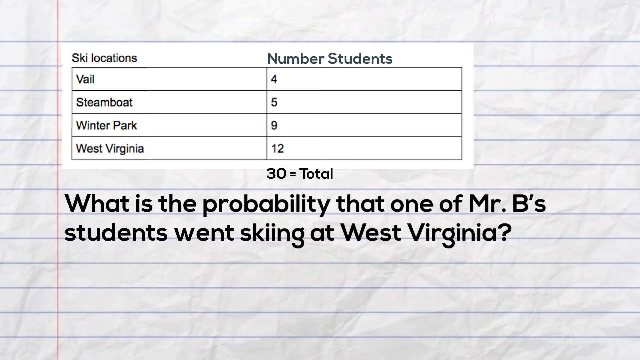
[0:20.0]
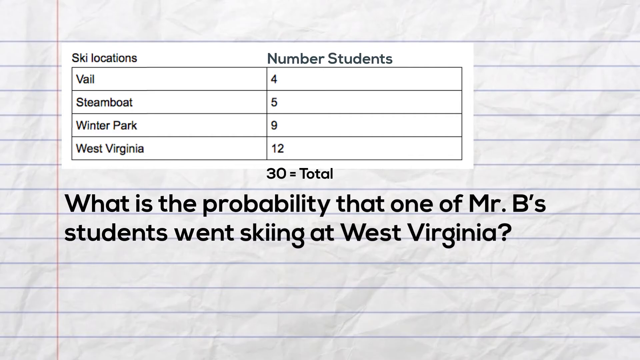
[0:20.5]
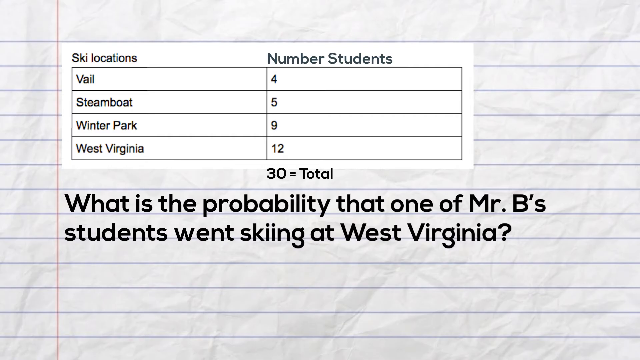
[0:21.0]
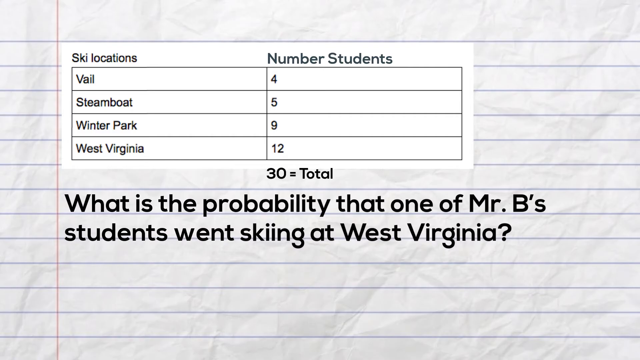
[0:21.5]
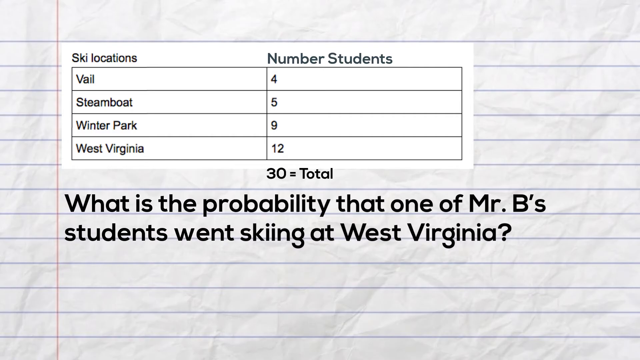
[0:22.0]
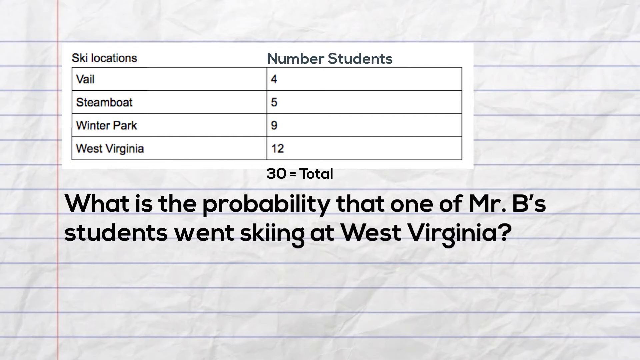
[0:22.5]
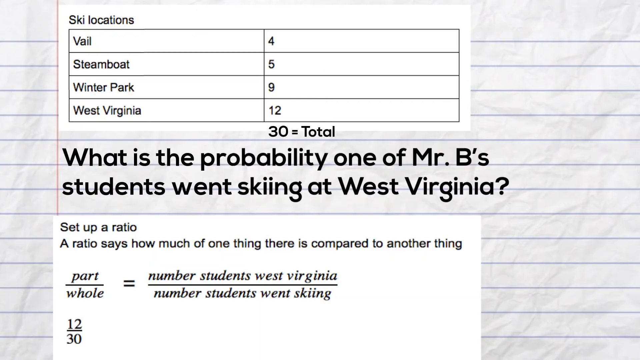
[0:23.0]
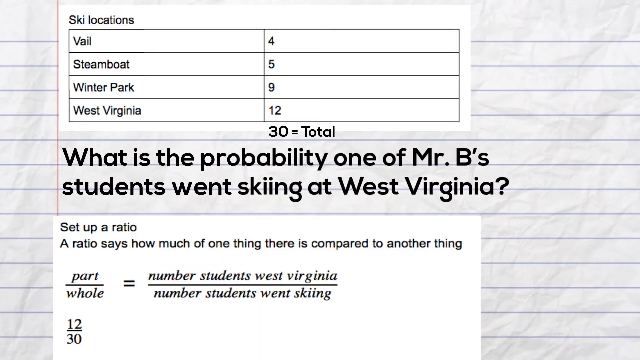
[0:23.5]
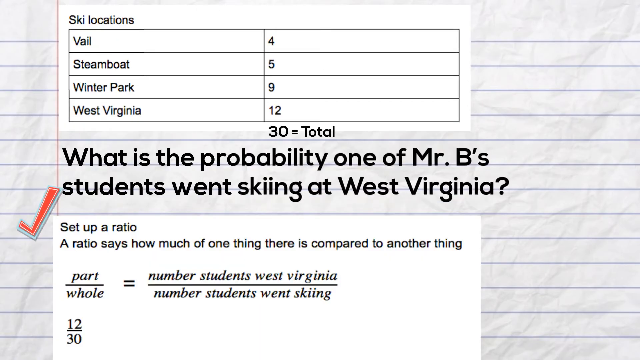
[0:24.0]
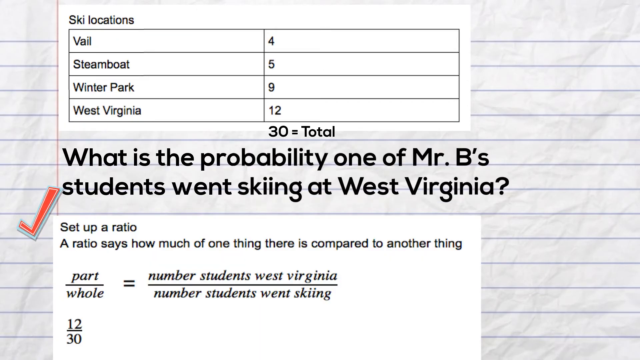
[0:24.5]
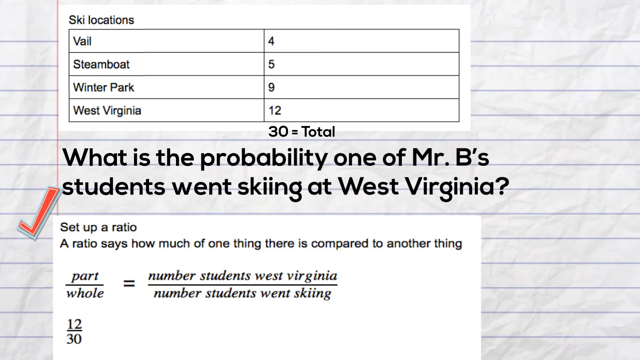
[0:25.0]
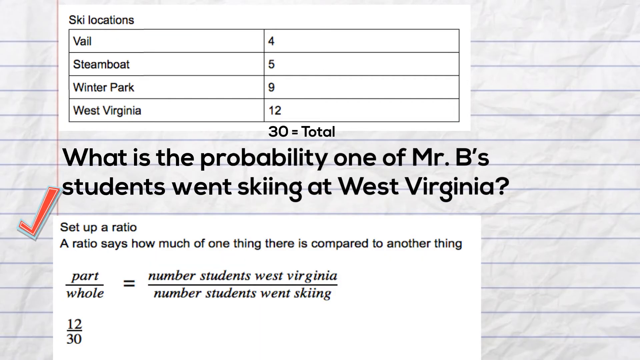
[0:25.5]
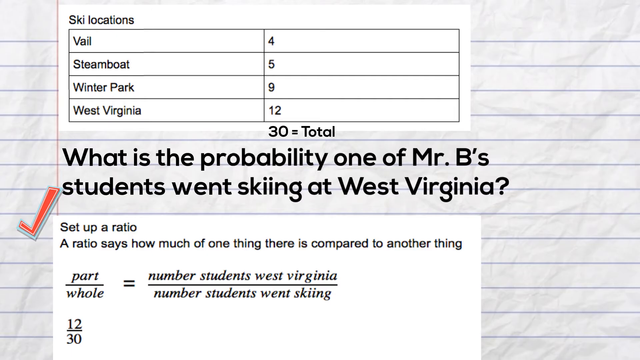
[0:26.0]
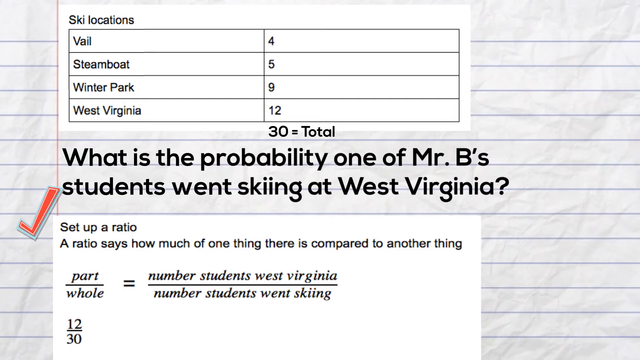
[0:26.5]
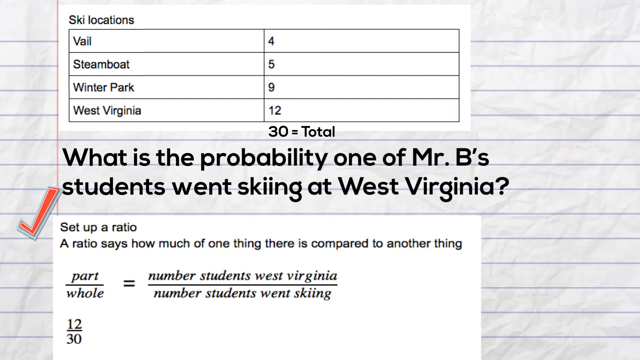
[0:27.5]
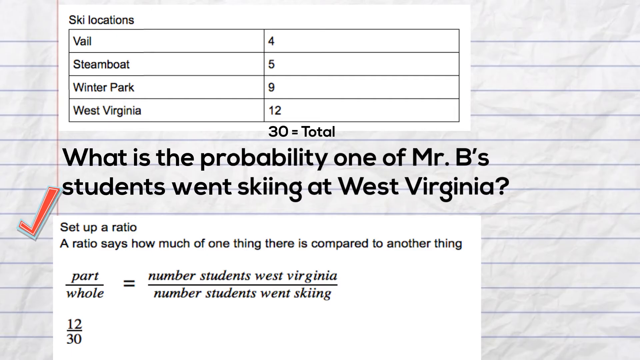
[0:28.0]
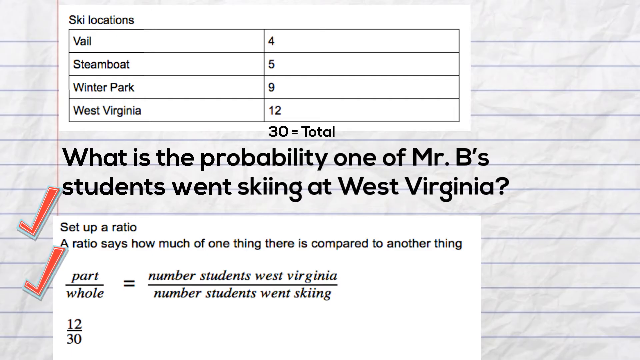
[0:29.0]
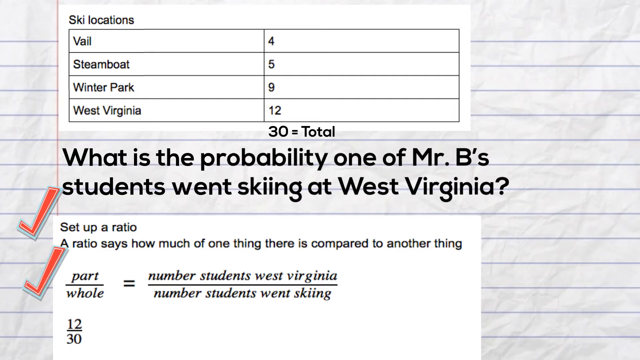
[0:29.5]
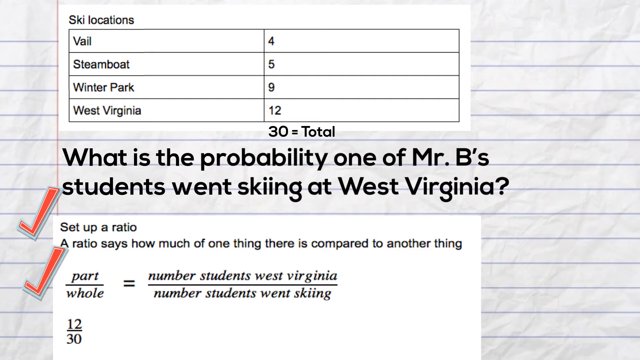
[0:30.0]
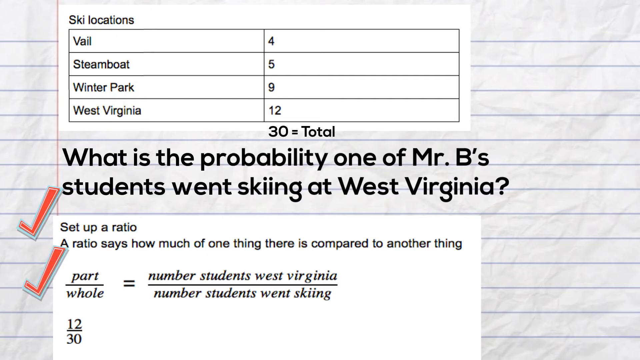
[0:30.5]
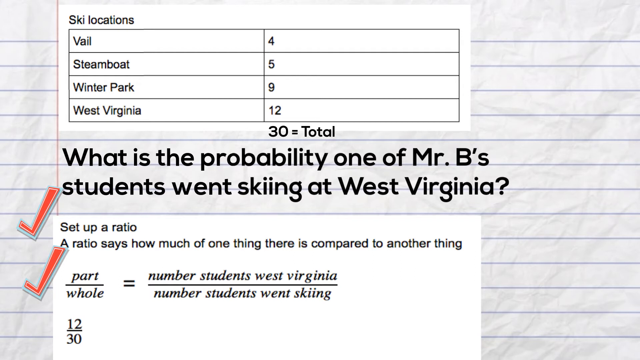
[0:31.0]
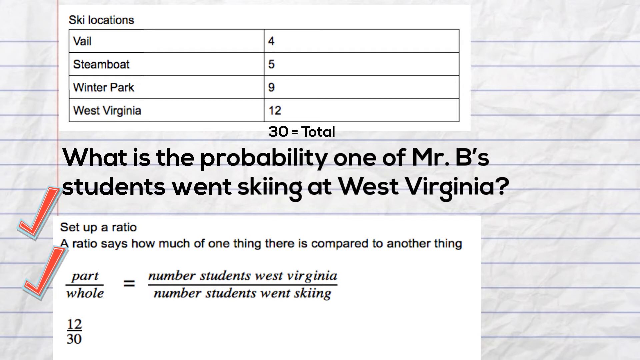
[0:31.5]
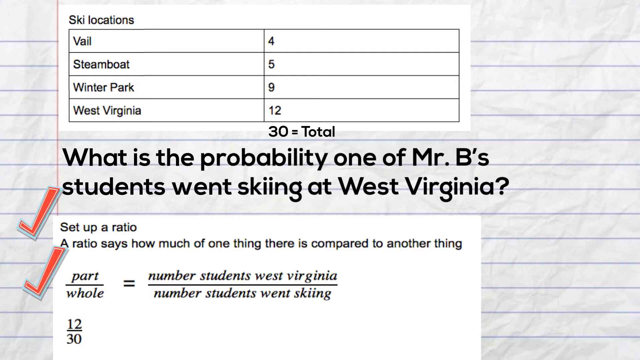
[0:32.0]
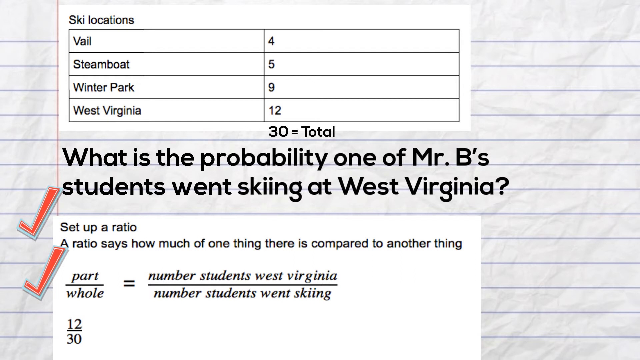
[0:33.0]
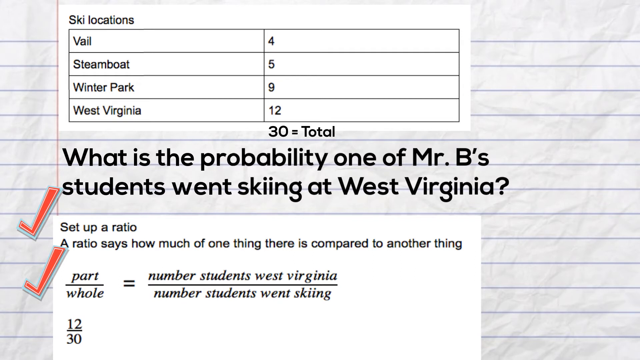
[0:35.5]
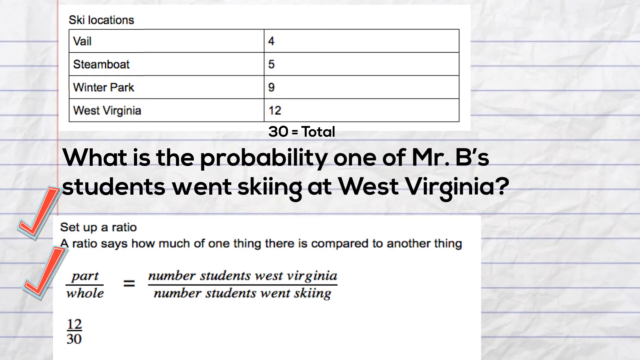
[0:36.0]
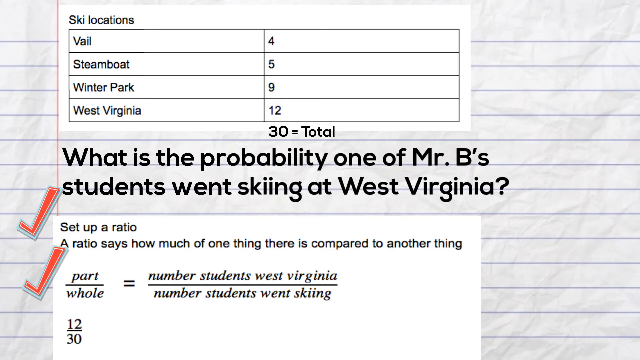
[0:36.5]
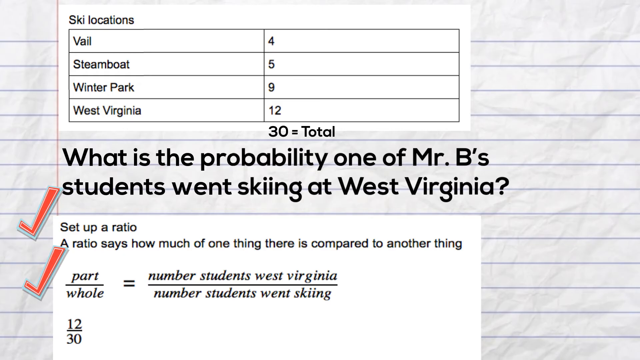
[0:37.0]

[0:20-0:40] The table and the question about the probability that one of Mr. B's students went skiing at West Virginia are on screen. After a moment, an orange check mark suddenly appears in the left margin. Another white rectangle, of the same type as the one the table is on, appears inset on the notebook page. It is titled "set up a ratio," and below the title is the explanation "a ratio says how much of one thing there is compared to another thing." A fraction follows, with the part as the numerator and the whole as the denominator: the number of students for West Virginia over the number of students who went skiing. An orange check mark appears by the ratio as it is set up.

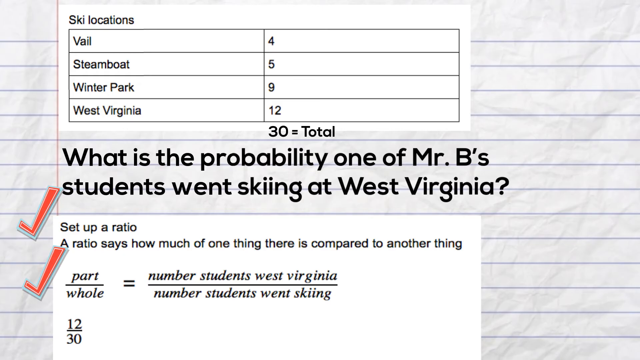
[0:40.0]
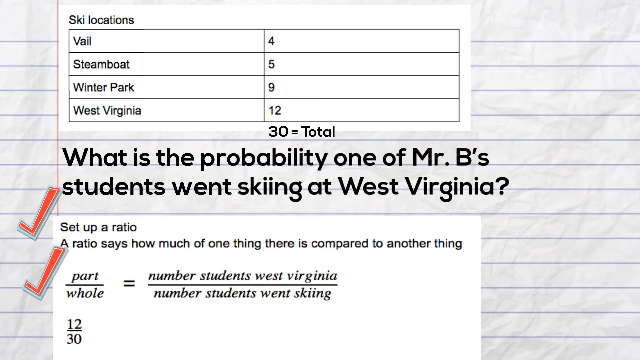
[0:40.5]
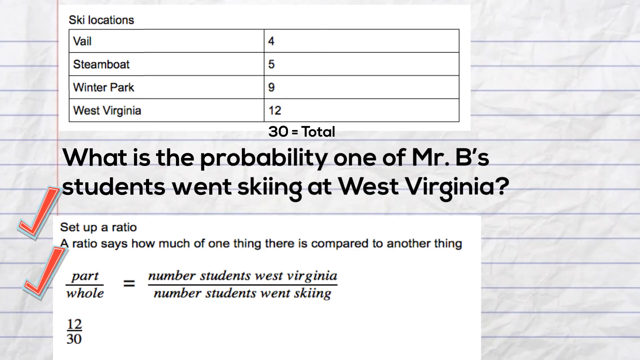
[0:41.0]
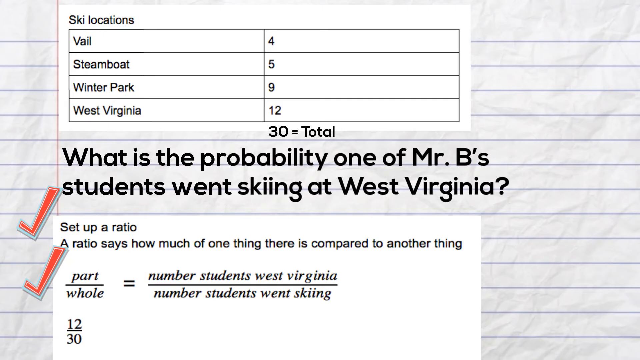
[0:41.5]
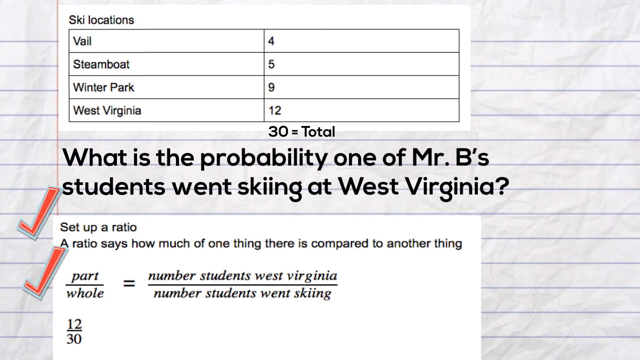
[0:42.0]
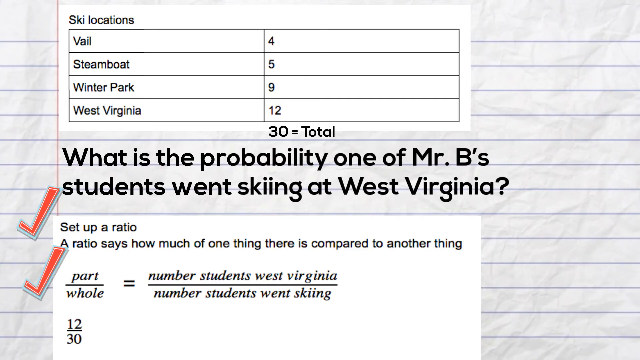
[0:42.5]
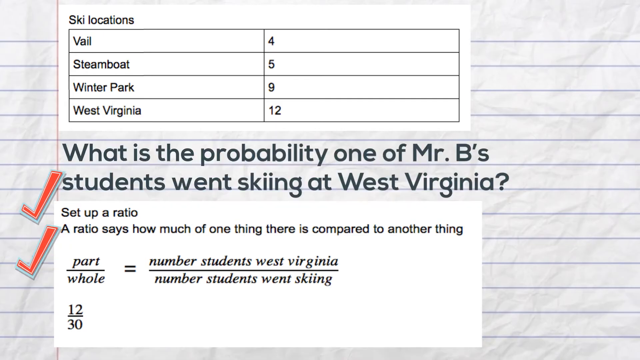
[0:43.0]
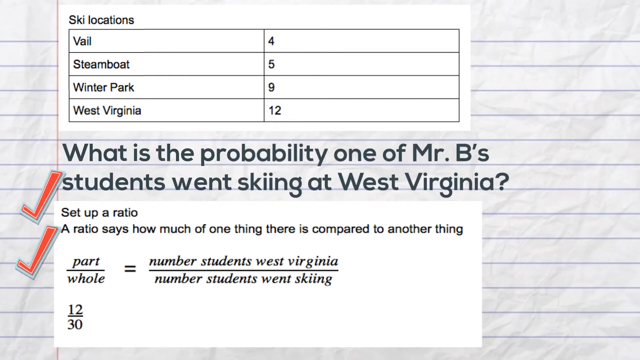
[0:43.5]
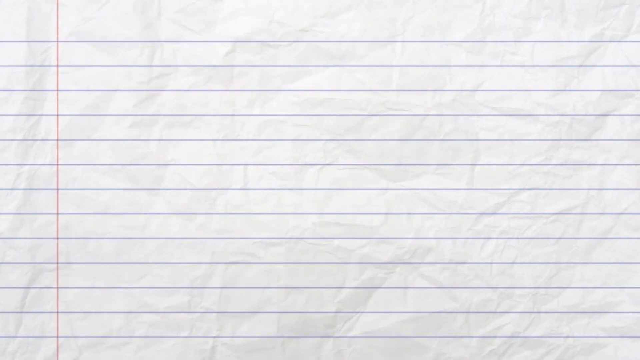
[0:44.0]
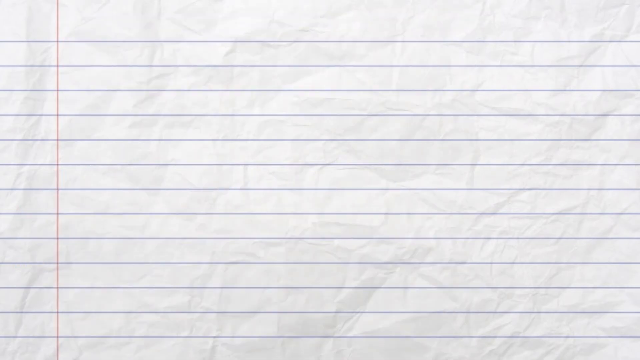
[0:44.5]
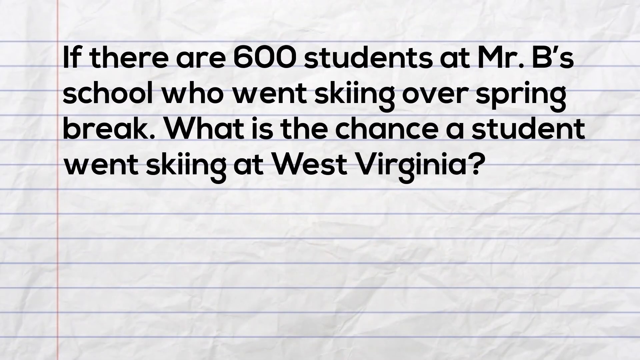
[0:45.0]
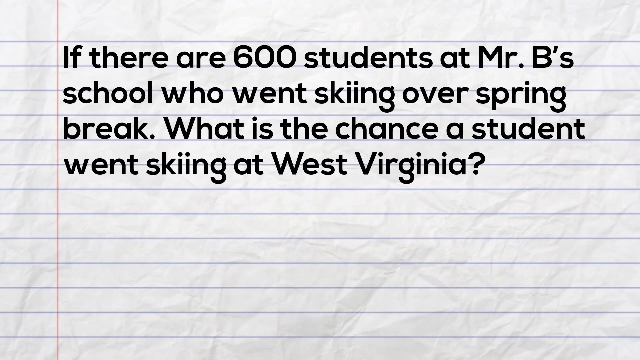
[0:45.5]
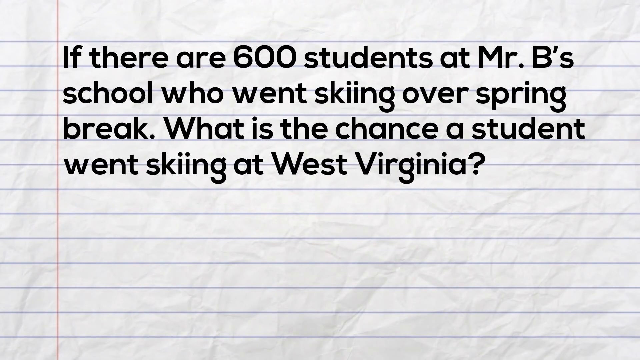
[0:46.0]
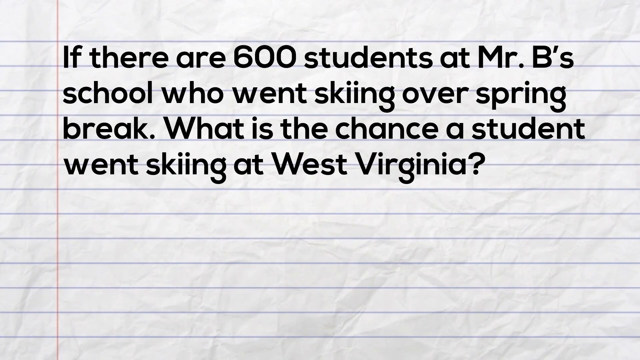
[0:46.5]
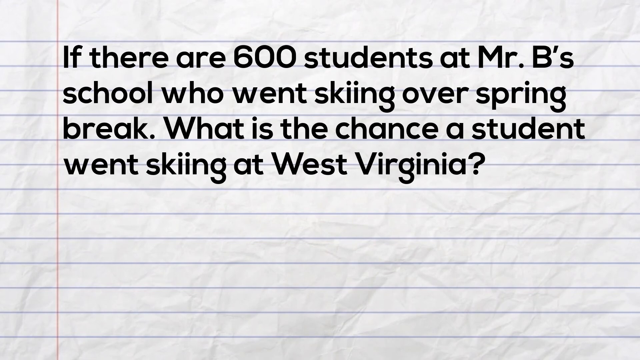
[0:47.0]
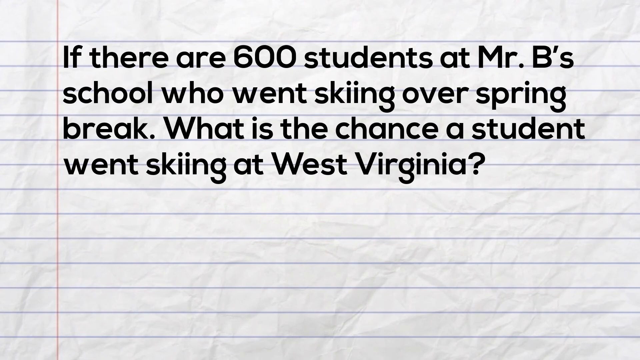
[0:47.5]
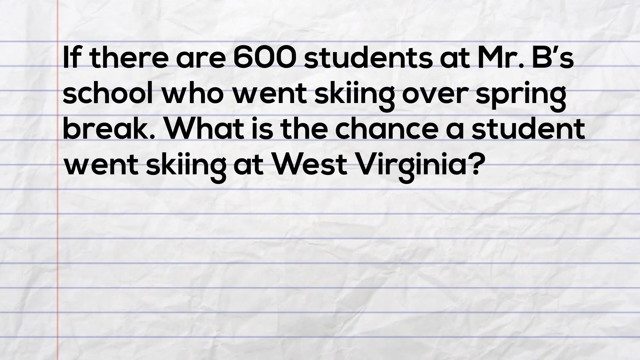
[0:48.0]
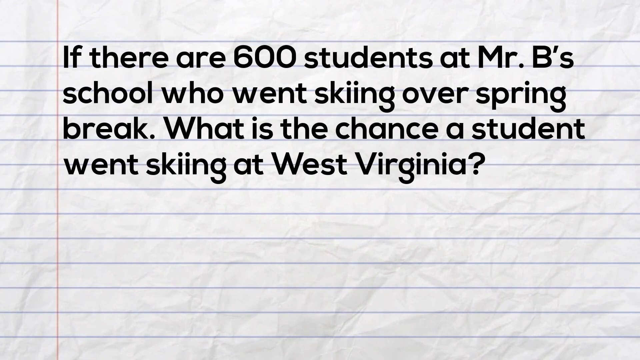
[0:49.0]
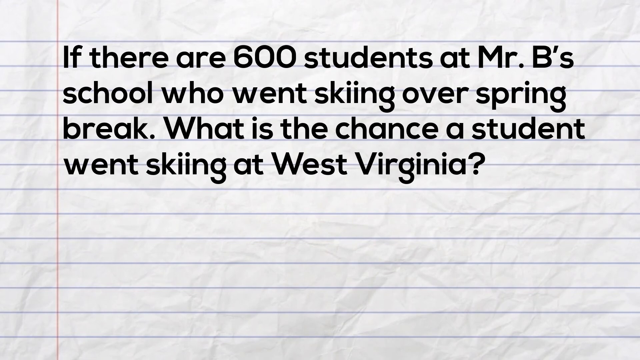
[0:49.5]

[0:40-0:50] The table with its check-marked question and the ratio setup with its own check mark are on screen. Both disappear, leaving the notebook page, and new text in bold black ink appears where the table was: "if there are 600 students at Mr. B's school who went skiing over spring break, what is the chance a student went skiing at West Virginia?" The question starts on the first line of the notebook page and extends down to the sixth line.